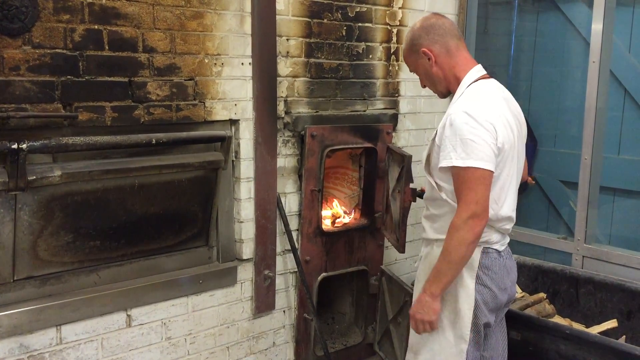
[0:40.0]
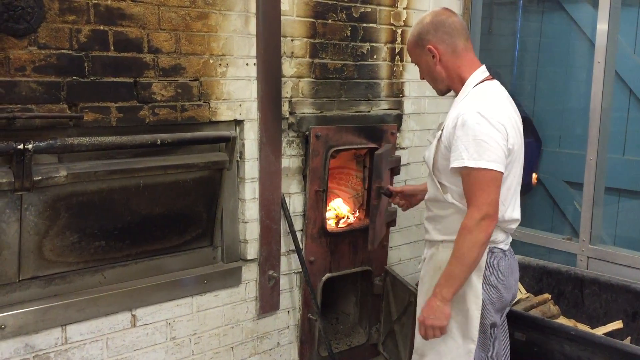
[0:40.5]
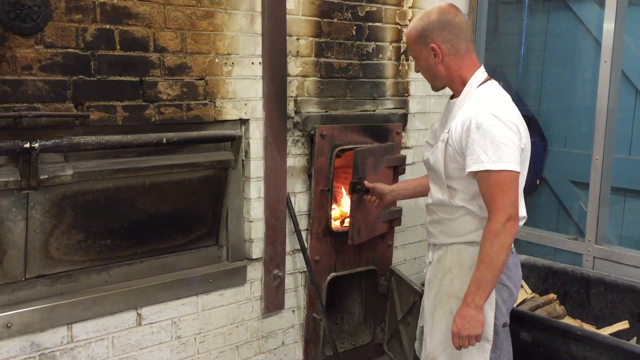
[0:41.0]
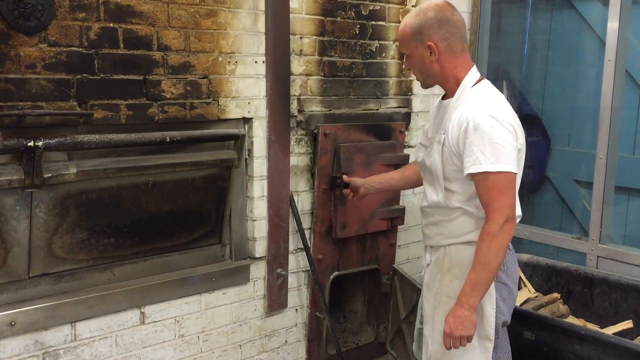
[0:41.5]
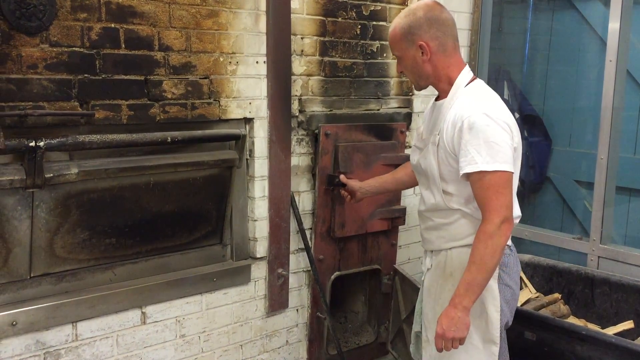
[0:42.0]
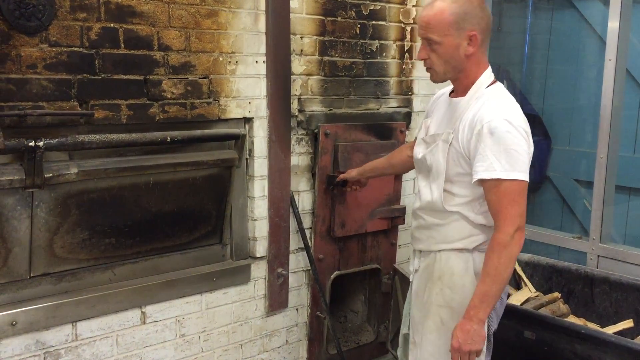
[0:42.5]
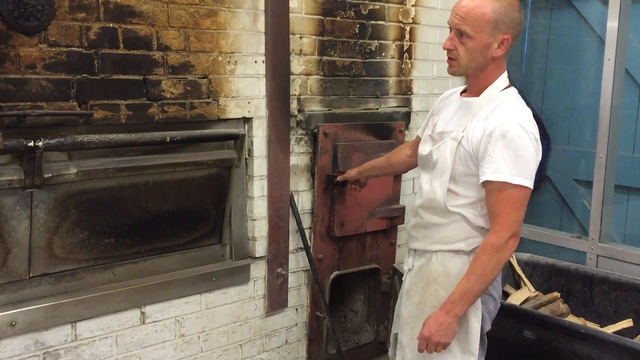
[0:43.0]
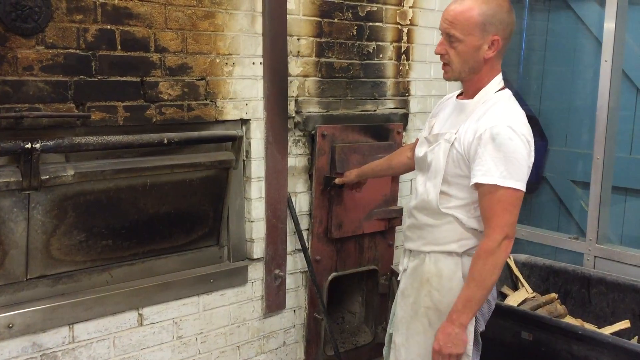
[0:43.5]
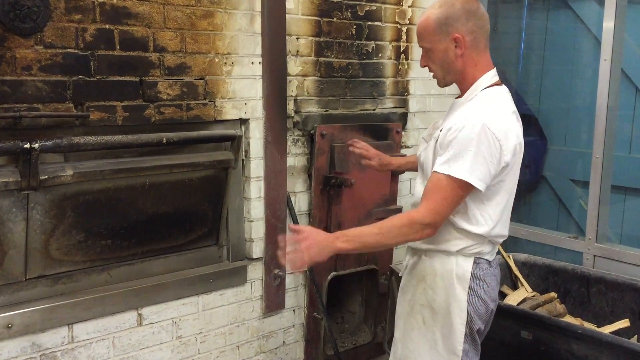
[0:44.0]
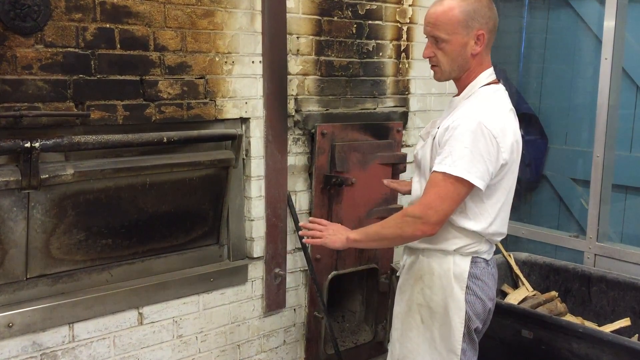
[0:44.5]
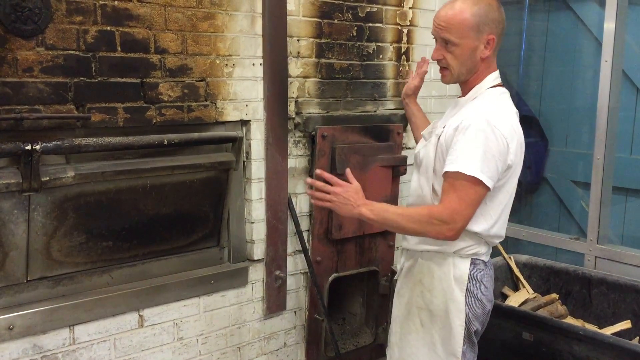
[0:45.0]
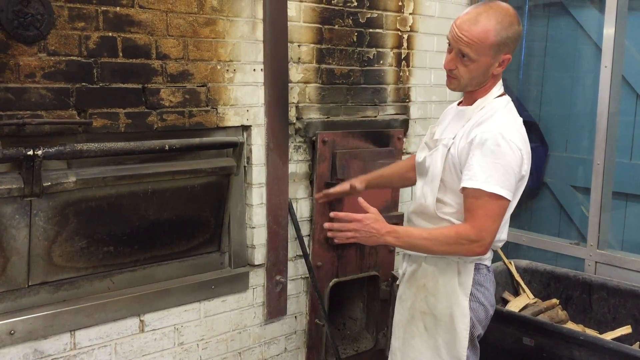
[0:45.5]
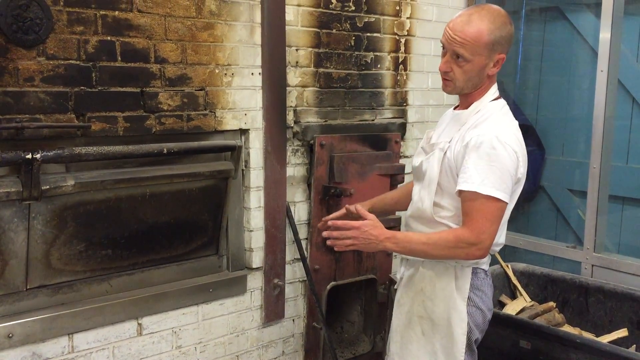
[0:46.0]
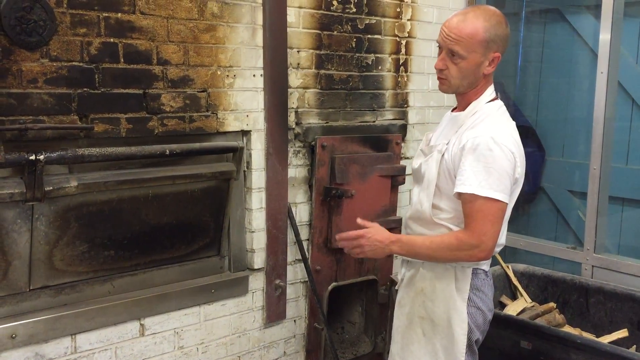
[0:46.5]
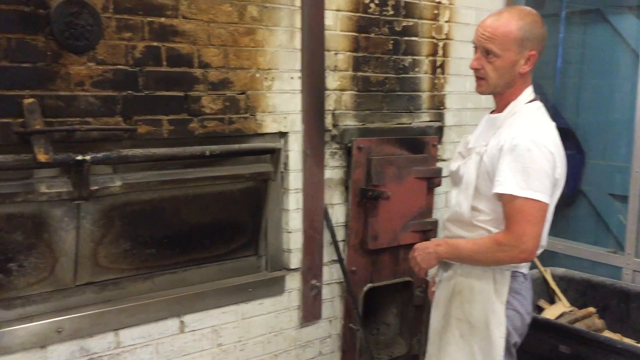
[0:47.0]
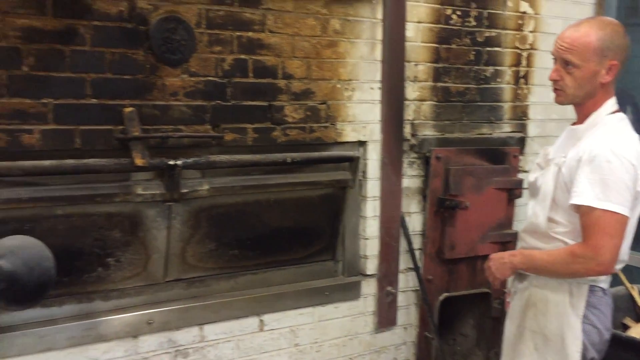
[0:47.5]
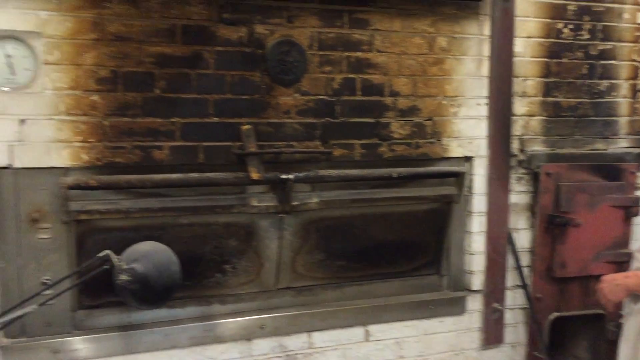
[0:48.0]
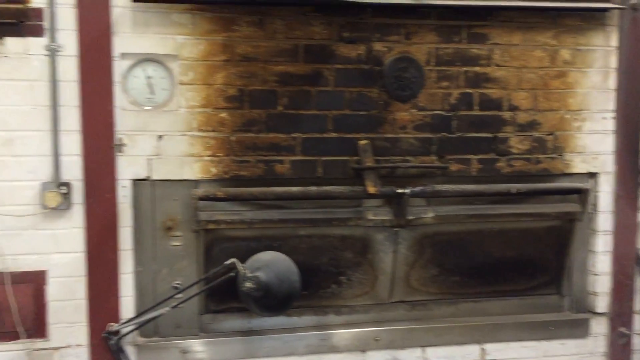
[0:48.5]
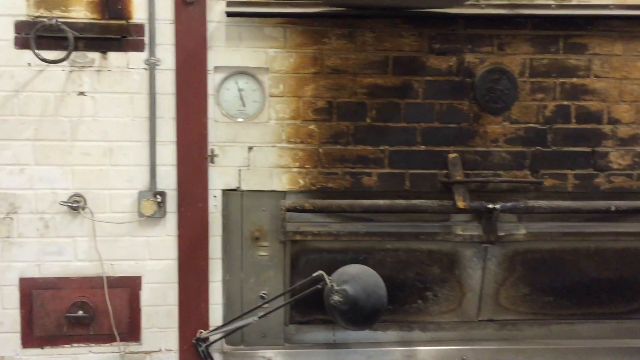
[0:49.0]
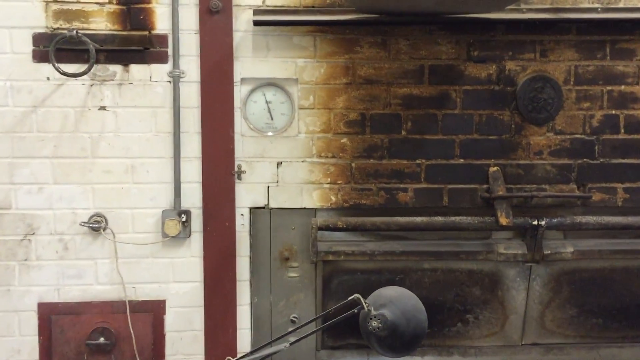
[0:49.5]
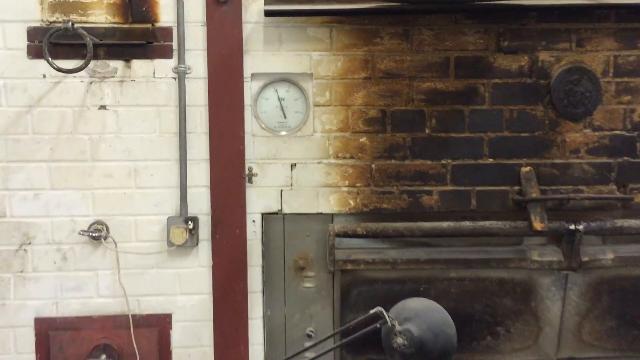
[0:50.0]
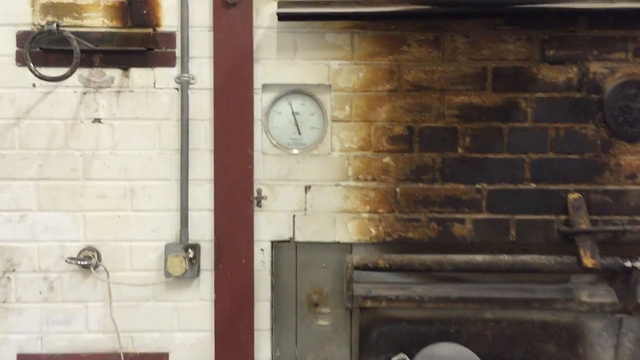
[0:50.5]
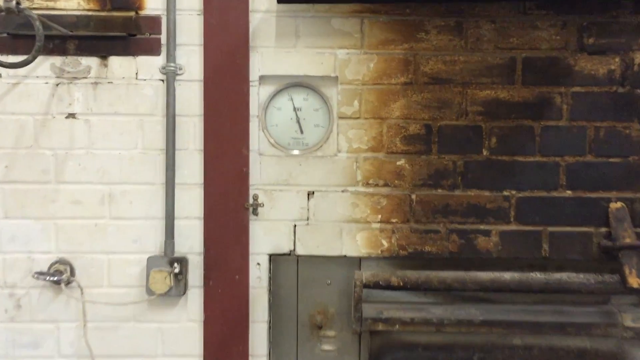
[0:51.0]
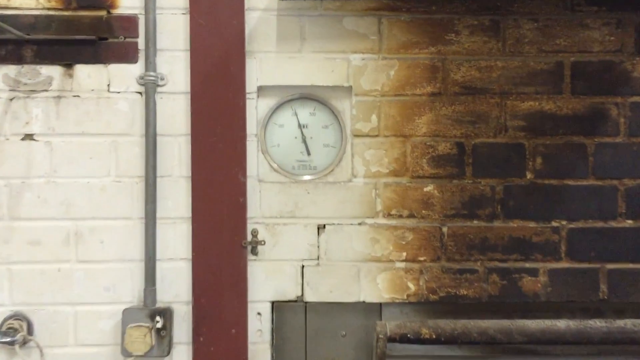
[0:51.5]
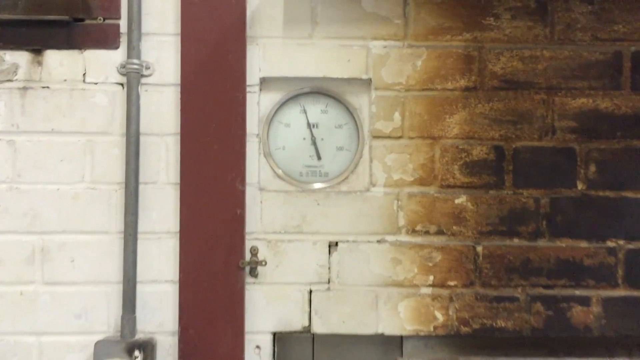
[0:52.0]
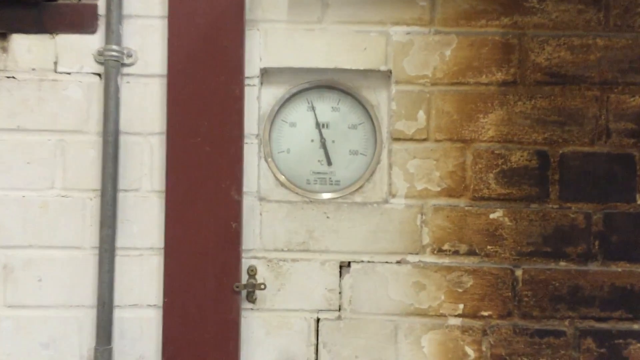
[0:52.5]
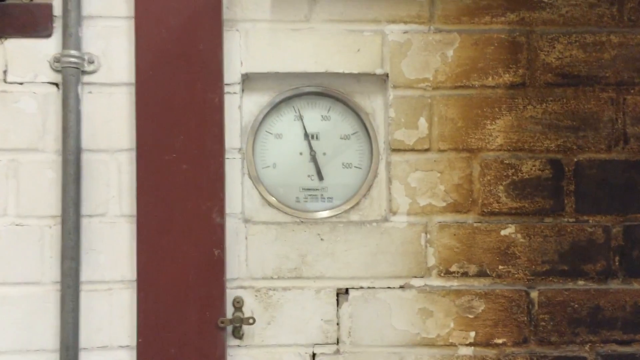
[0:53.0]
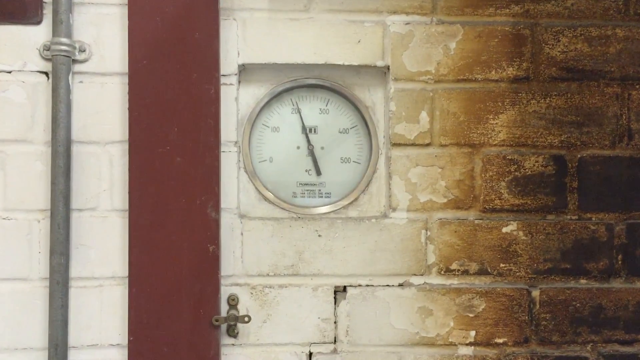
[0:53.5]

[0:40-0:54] The man continues starting the fire, which might be used to feed the ovens. It is in what appears to be a metal opening in the wall with a door on it. Once the fire is underway, he shuts the door, then talks and moves his arms around while looking over at the ovens. The camera zooms in on what appears to be a thermometer, possibly monitoring the heat in the ovens.